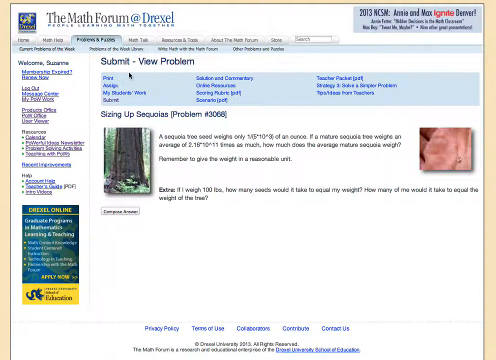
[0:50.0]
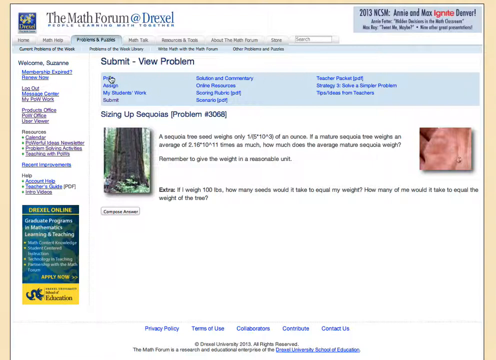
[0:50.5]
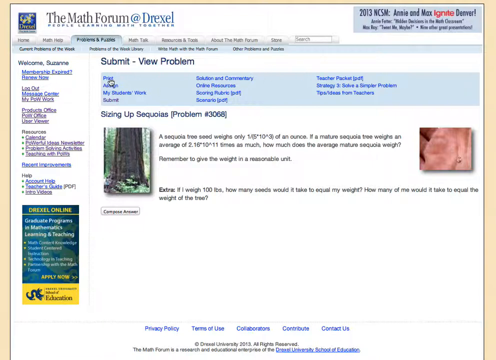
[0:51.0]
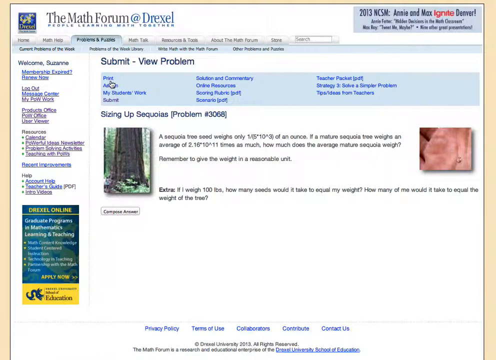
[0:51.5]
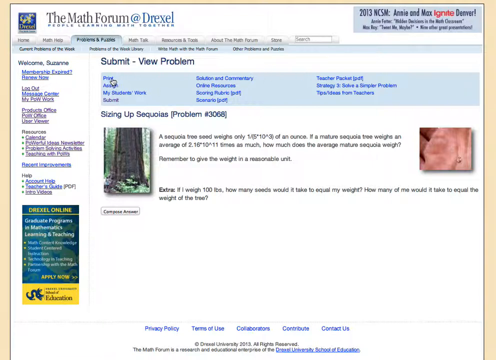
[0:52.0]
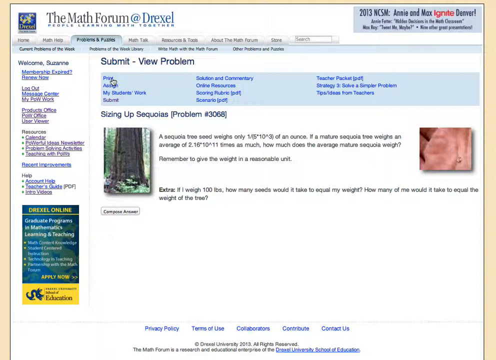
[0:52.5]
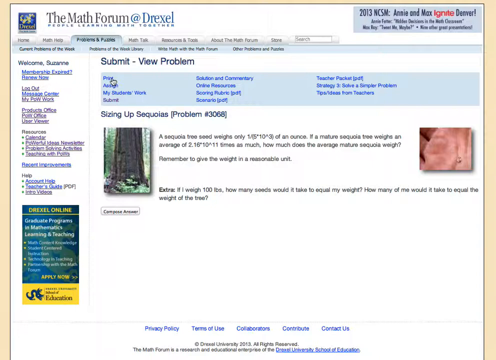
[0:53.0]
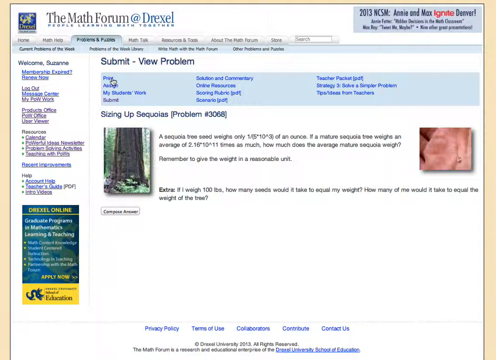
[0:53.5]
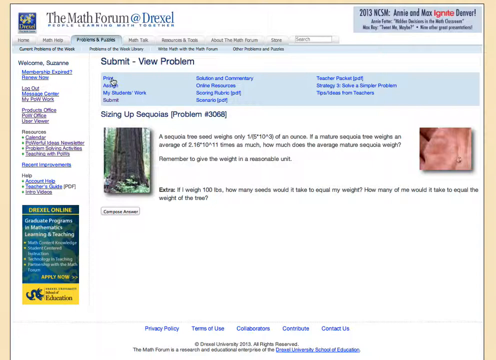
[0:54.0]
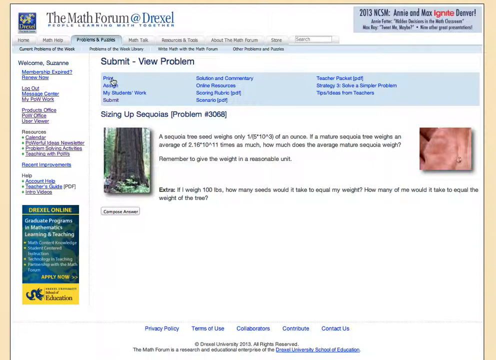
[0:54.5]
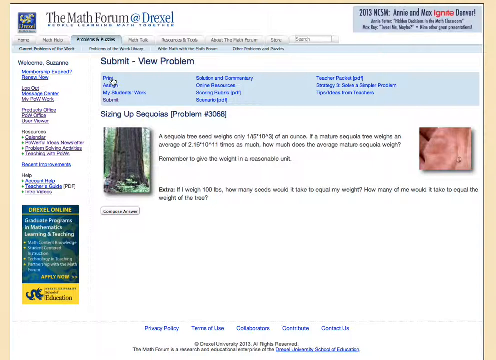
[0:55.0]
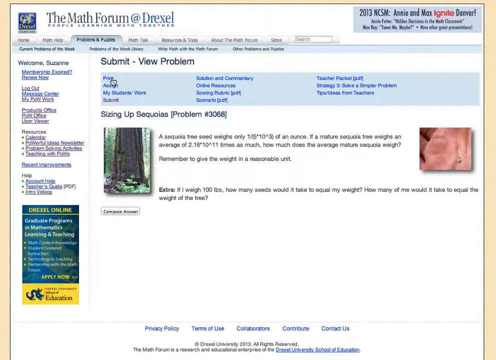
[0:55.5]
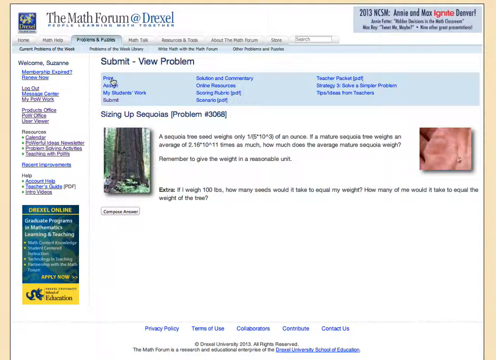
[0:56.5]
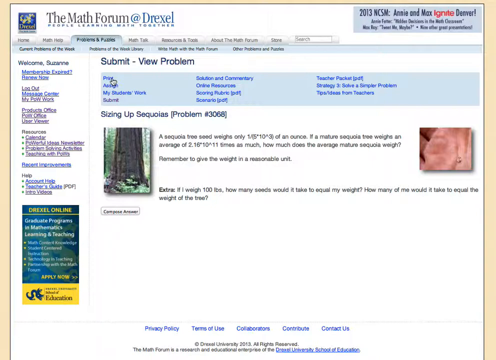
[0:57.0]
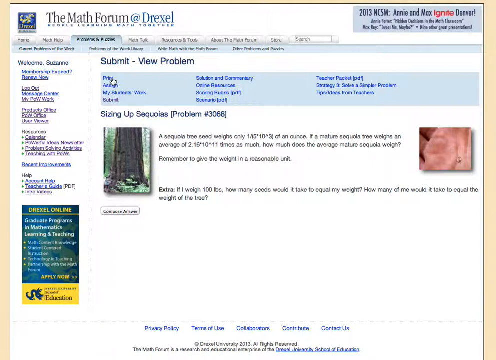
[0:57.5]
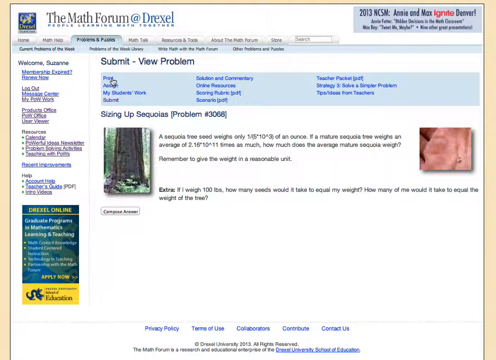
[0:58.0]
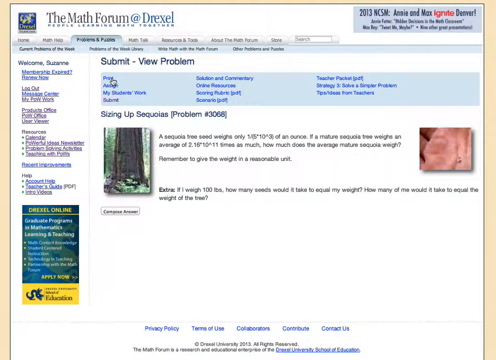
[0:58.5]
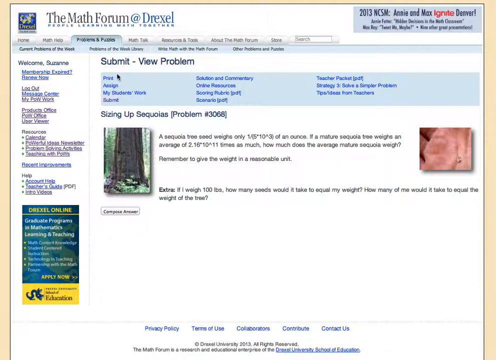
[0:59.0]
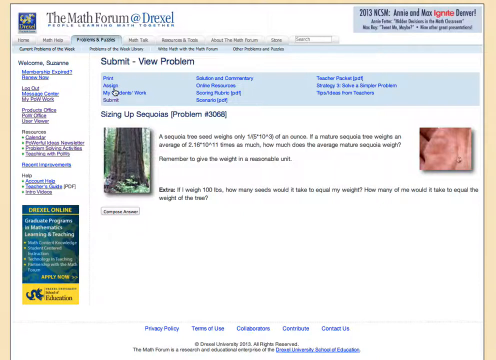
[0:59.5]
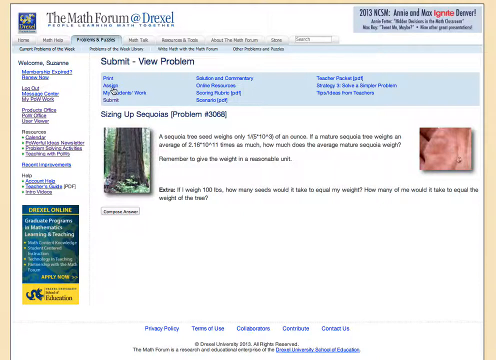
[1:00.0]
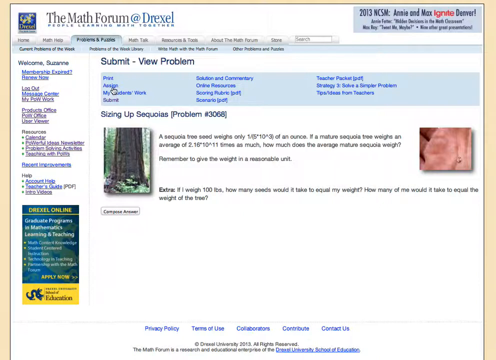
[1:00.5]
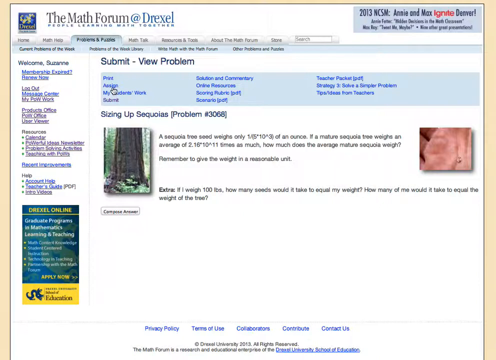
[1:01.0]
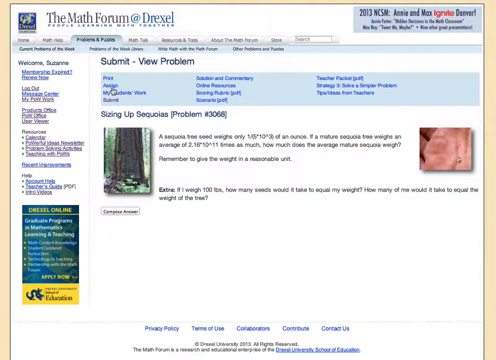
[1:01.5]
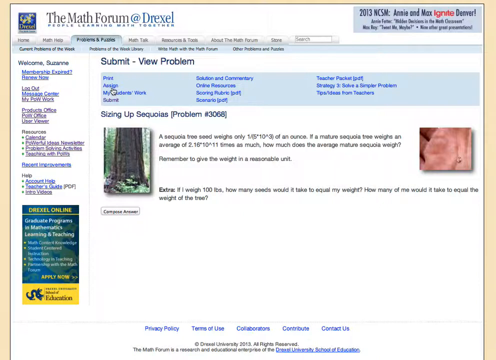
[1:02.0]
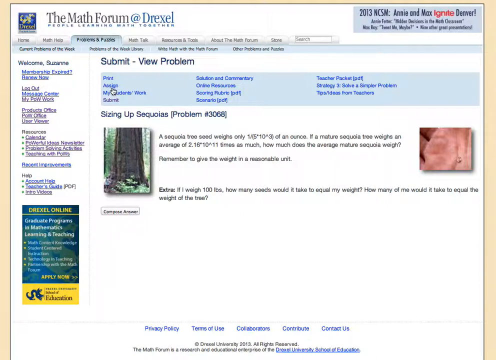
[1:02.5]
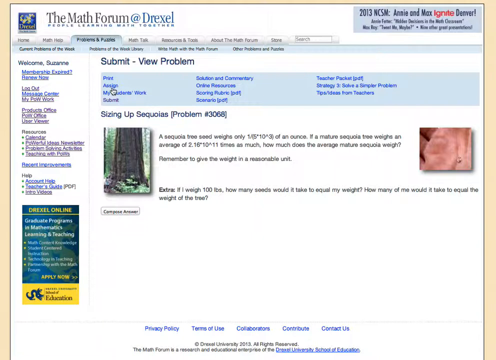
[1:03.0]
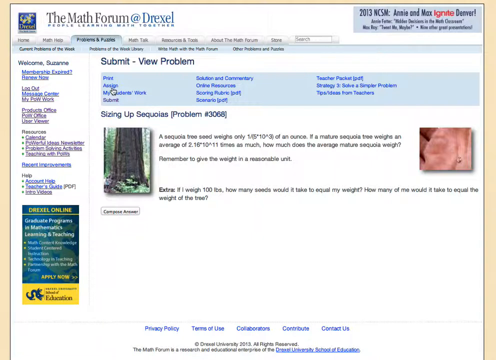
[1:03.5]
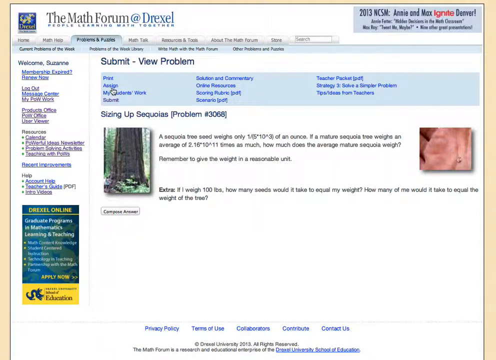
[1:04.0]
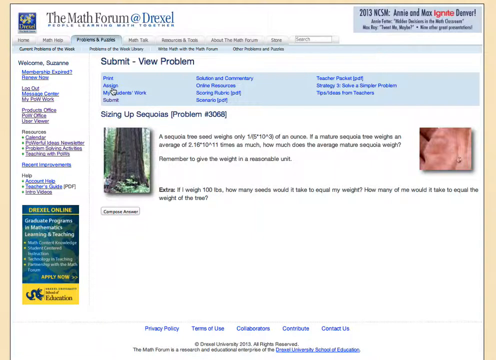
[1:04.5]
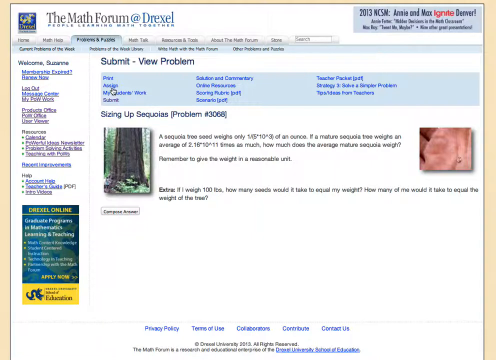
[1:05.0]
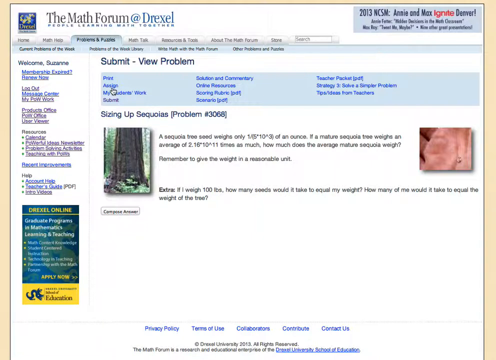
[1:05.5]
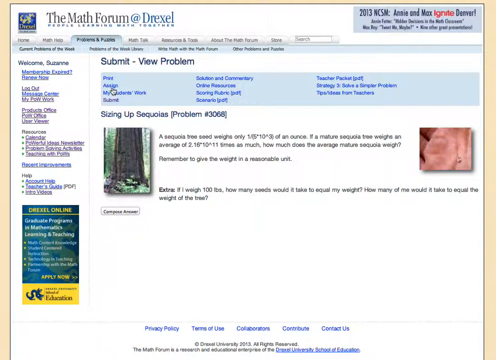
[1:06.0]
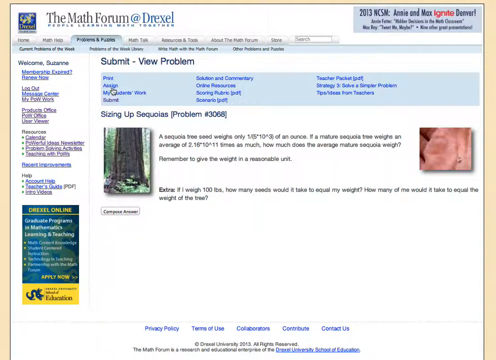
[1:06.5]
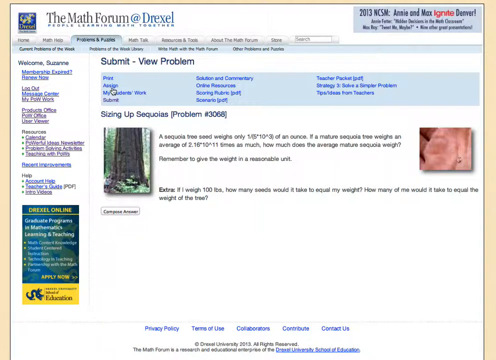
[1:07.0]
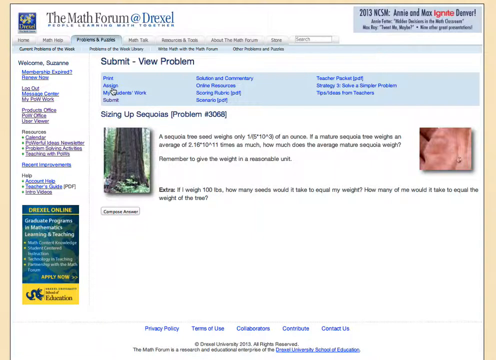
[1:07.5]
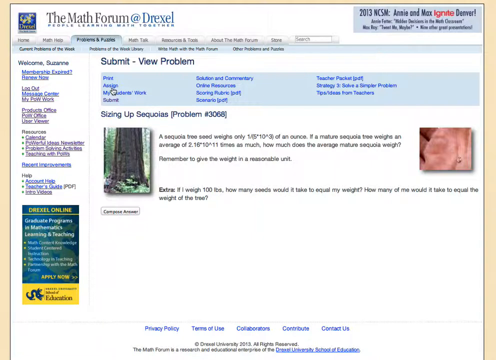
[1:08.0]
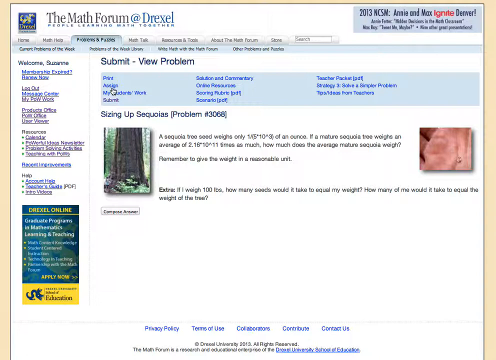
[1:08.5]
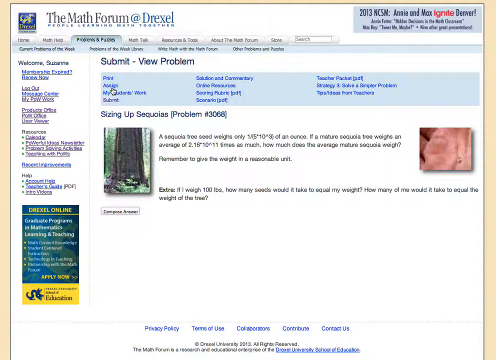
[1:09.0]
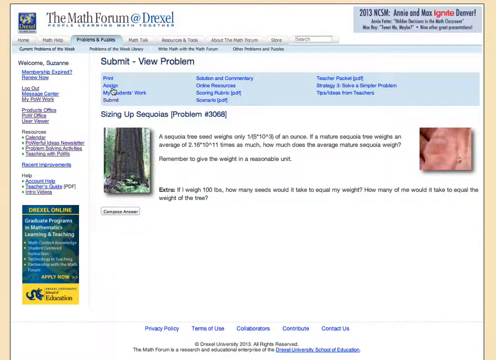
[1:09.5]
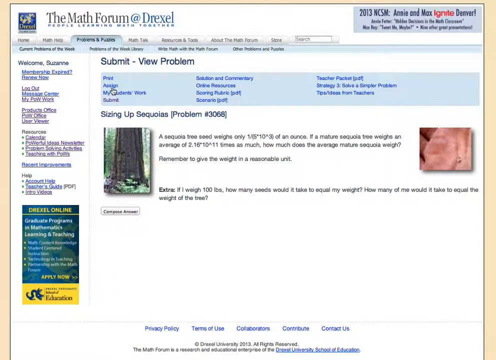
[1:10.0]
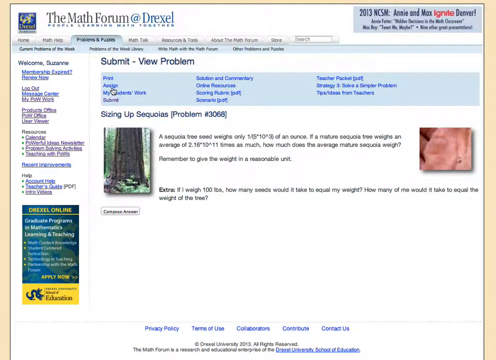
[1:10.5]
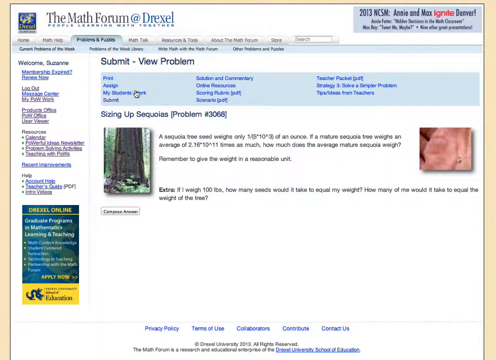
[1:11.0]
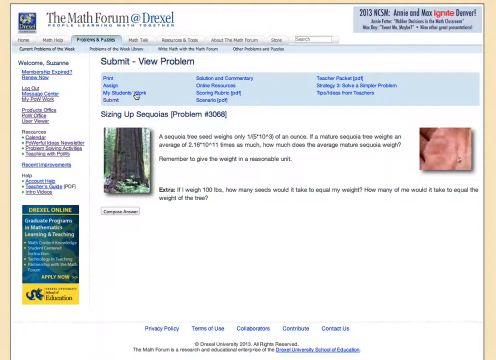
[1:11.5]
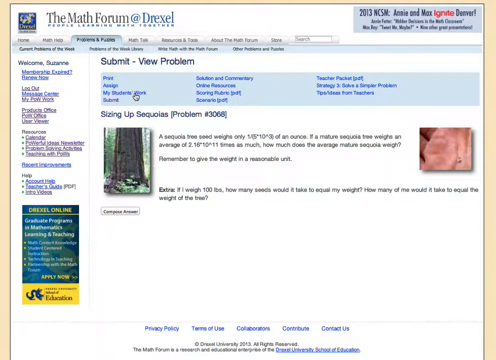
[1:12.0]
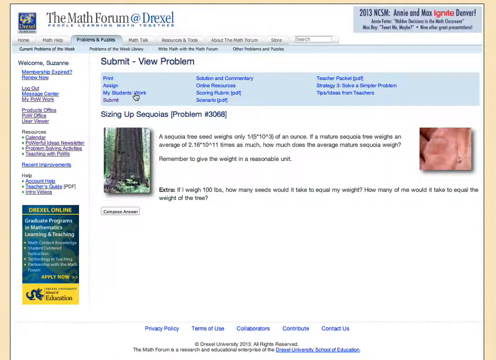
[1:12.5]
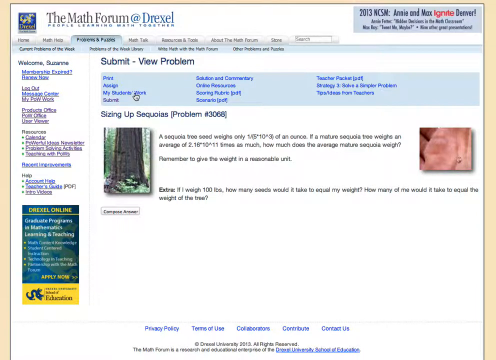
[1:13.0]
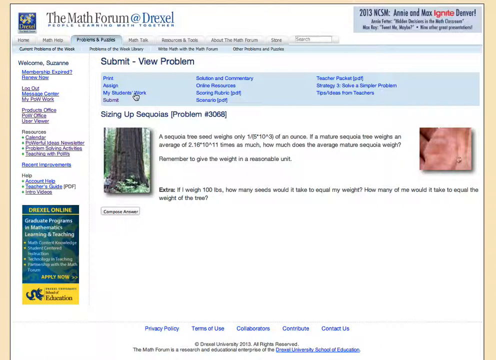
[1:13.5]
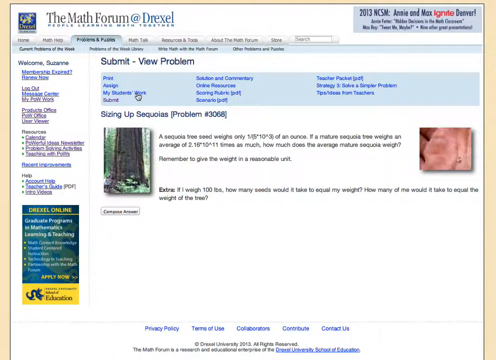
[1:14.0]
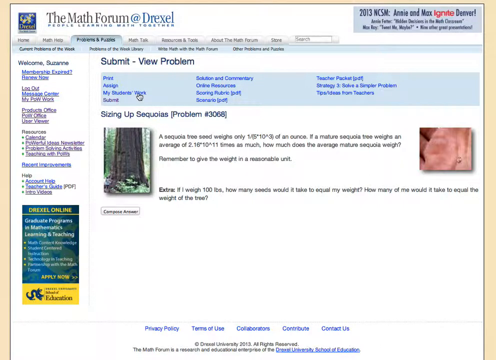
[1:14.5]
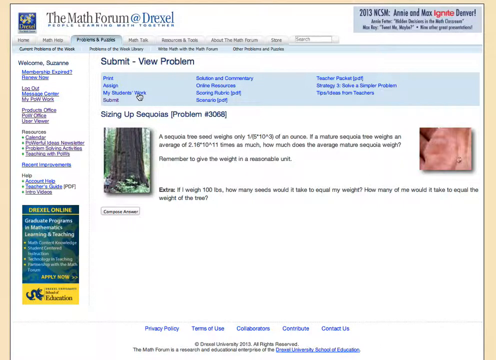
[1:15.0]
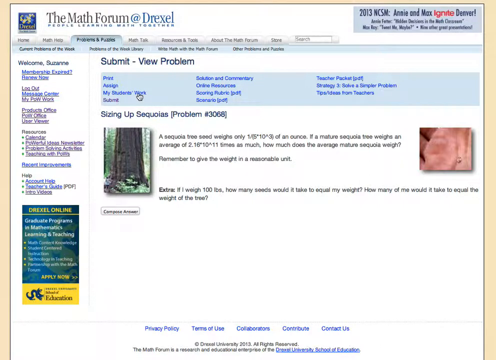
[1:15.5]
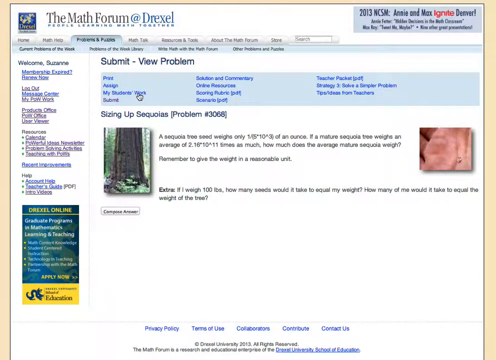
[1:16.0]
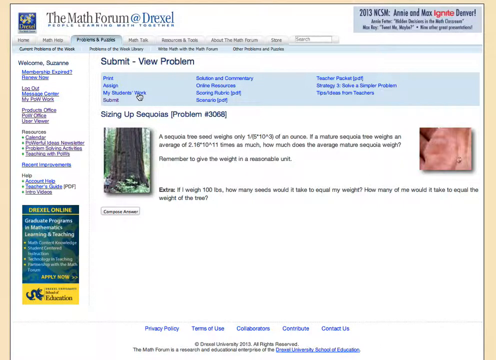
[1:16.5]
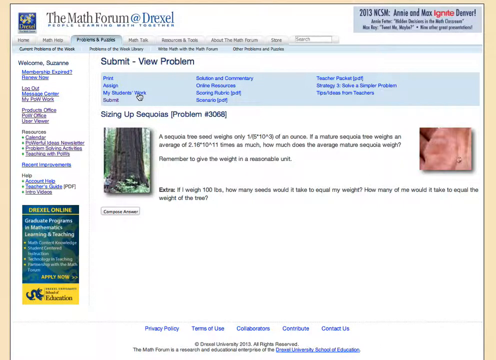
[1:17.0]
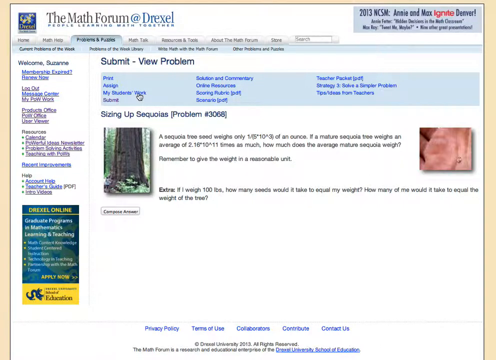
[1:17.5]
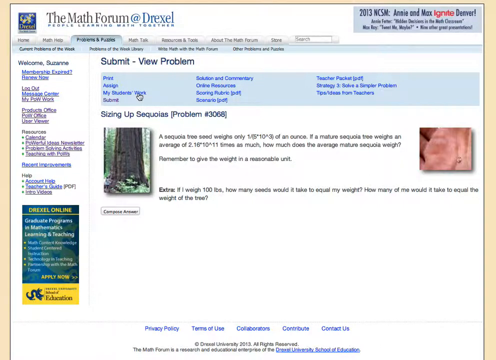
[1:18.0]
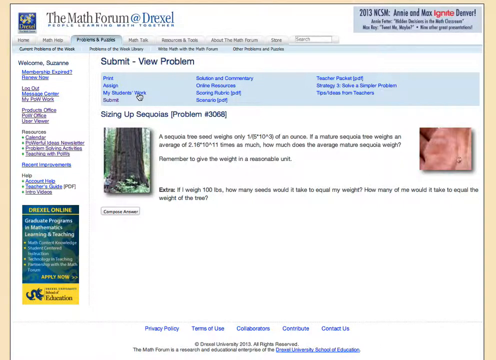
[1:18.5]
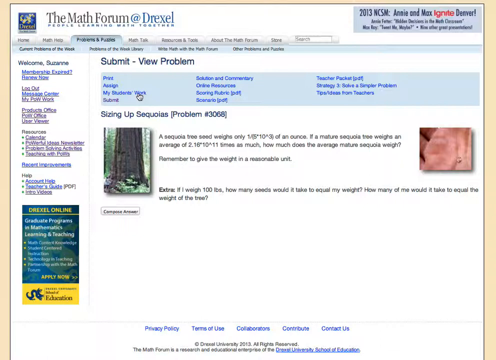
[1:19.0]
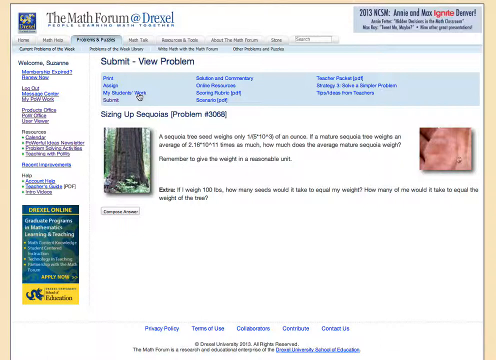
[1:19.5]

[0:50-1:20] The webpage has a mostly white background. At the top left corner, black text says "the math forum," followed by "at Drexel" in blue characters, and below that blue text reads "people learning math together." In the top right corner of the screen is a light blue rectangle containing darker blue text that says "2013 NCSM Annie and Max Ignite Denver." Below the text at the top is a tab menu; the readable tabs say "home," "math help," "math talk," "store," and "about the math forum." Below the tab menu, more blue text on the white background includes "submit," "view problem," "my student's work," "submit," and "solution and commentary." The resolution is poor, making much of the wording hard to see. Below that it says "sizing up Sequoias, problem number 3068."